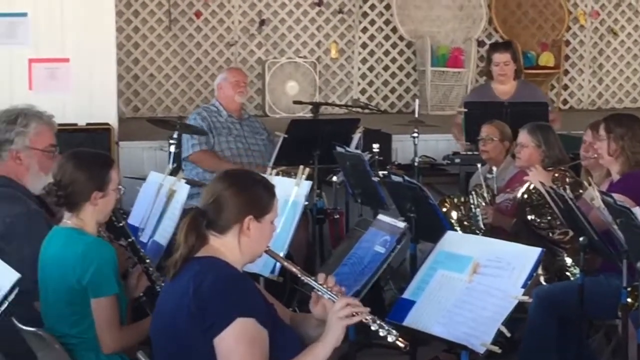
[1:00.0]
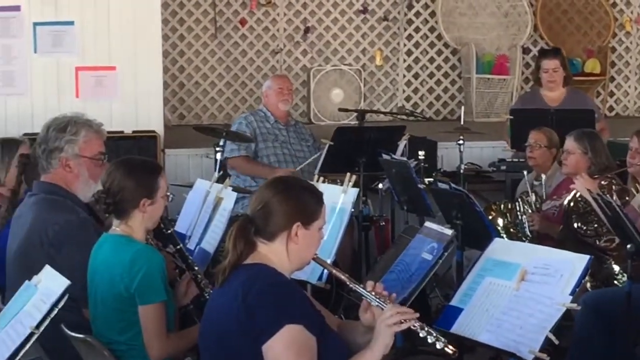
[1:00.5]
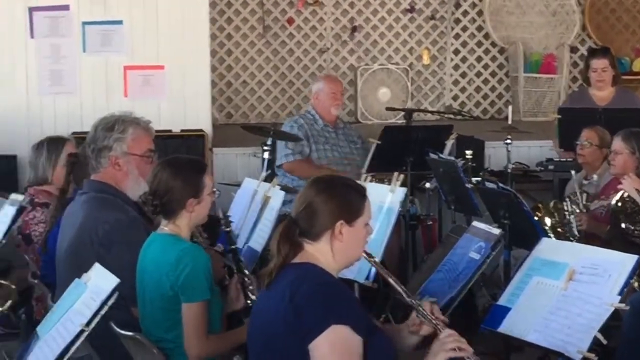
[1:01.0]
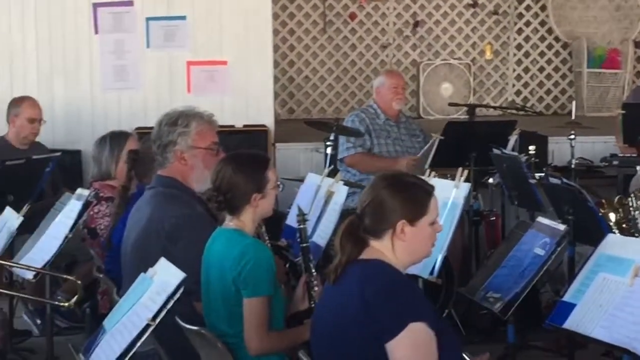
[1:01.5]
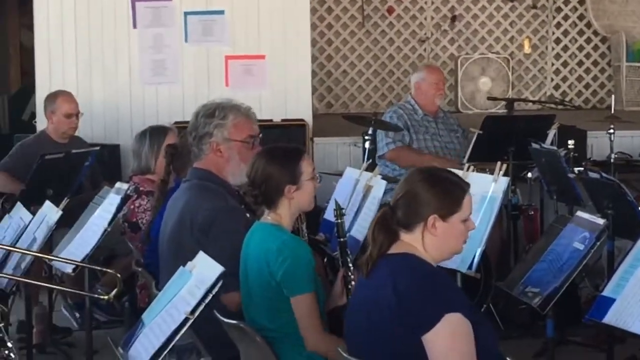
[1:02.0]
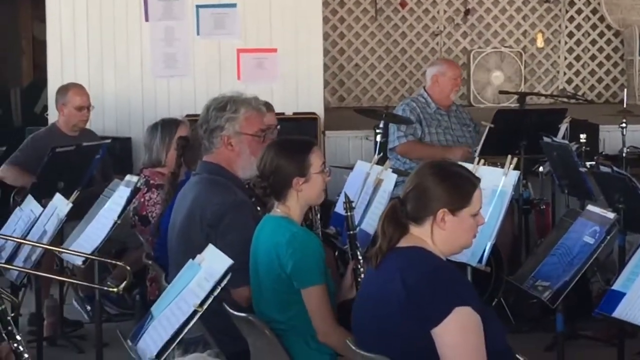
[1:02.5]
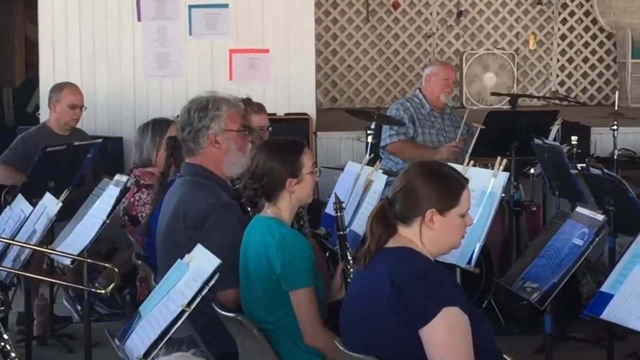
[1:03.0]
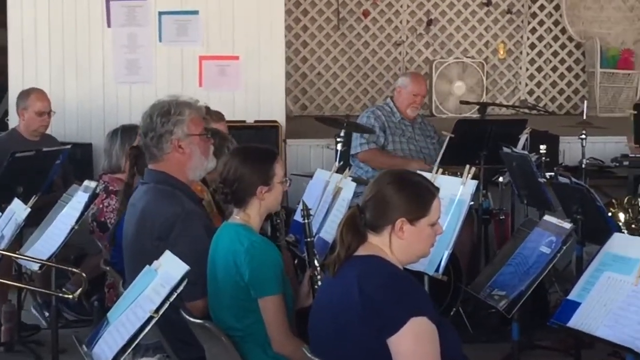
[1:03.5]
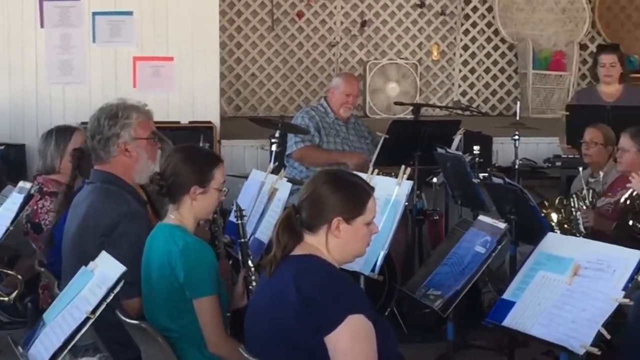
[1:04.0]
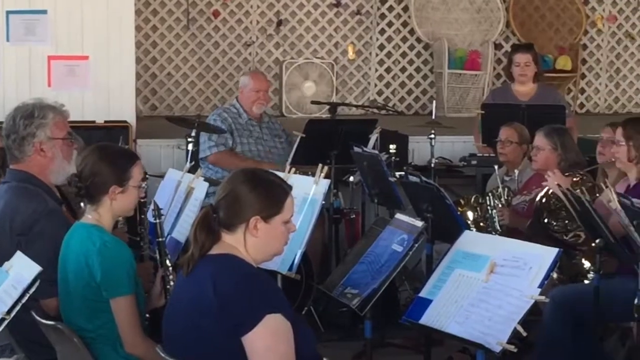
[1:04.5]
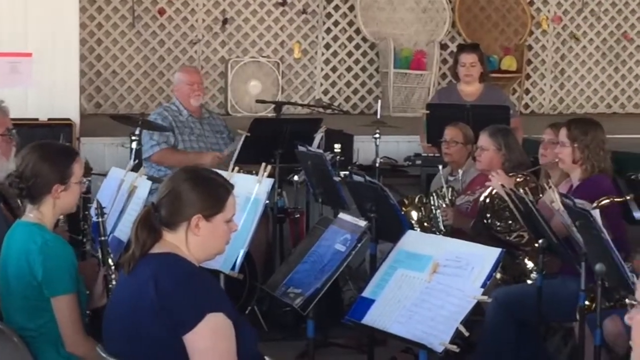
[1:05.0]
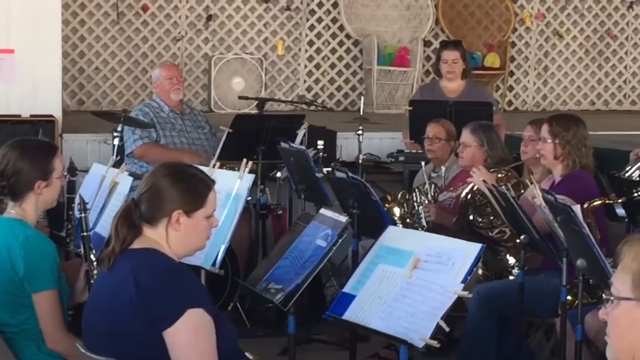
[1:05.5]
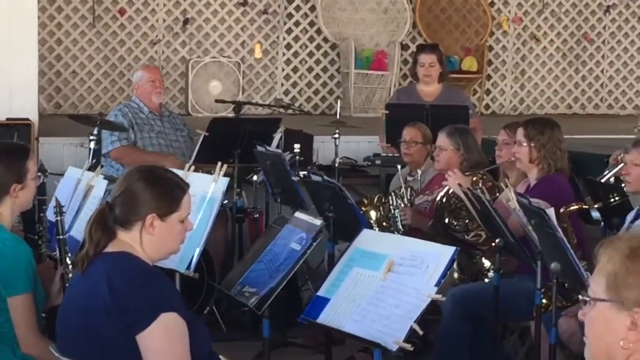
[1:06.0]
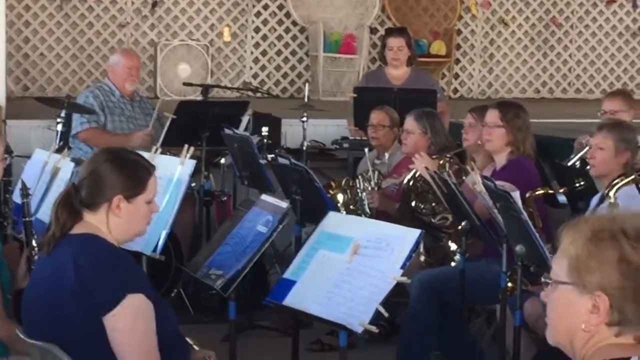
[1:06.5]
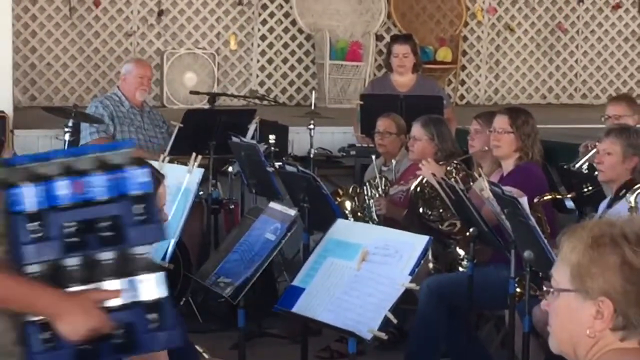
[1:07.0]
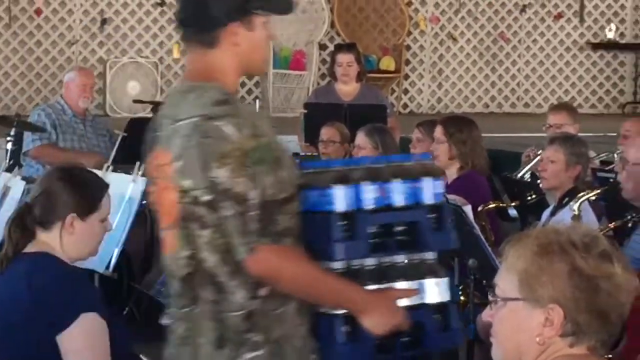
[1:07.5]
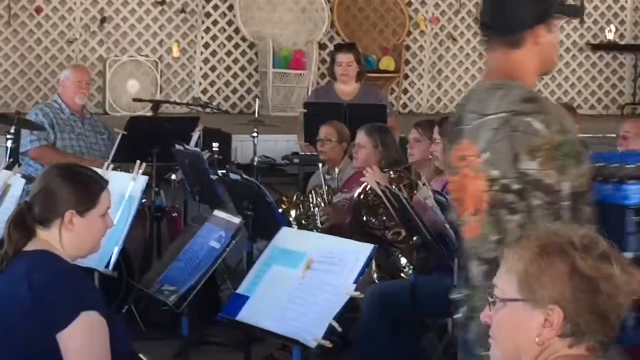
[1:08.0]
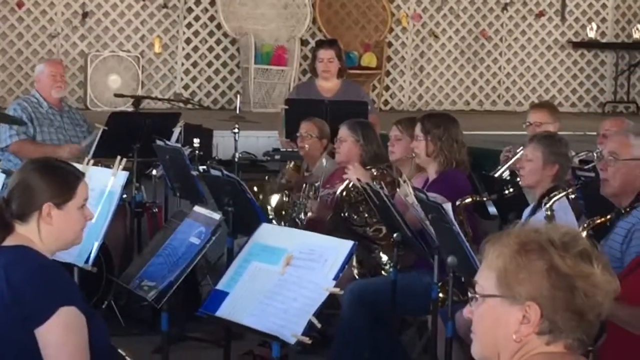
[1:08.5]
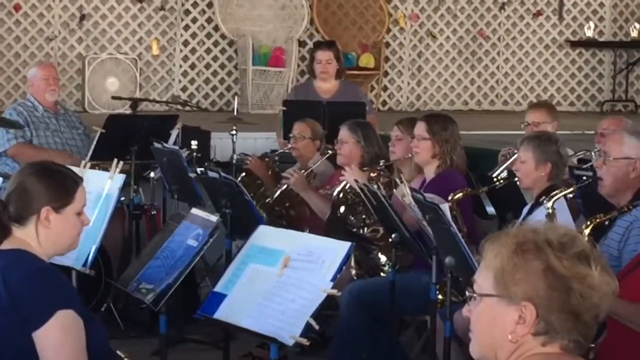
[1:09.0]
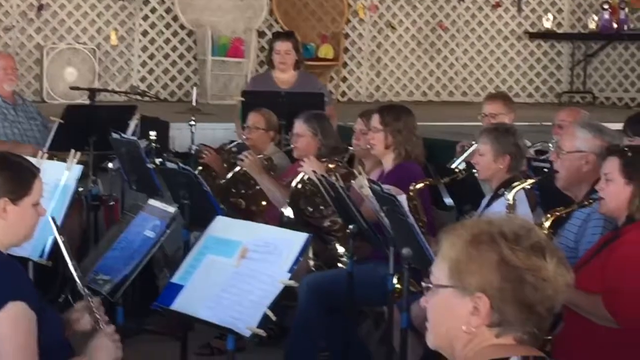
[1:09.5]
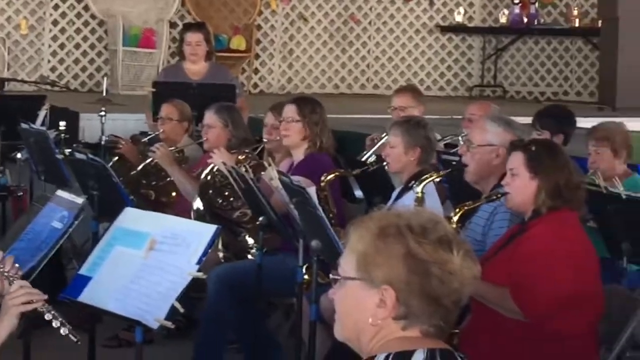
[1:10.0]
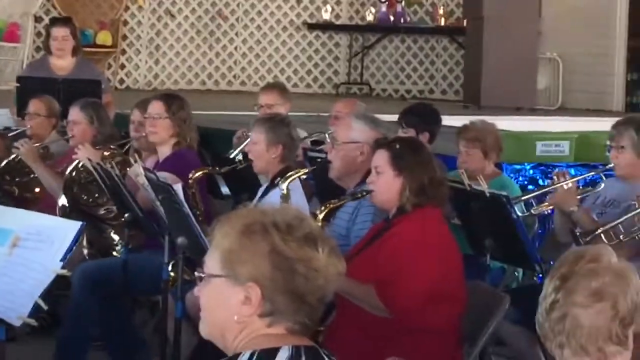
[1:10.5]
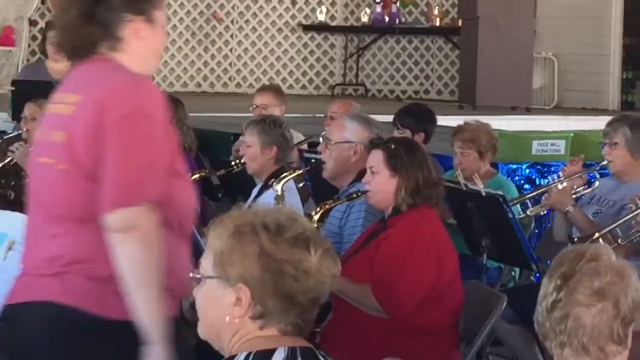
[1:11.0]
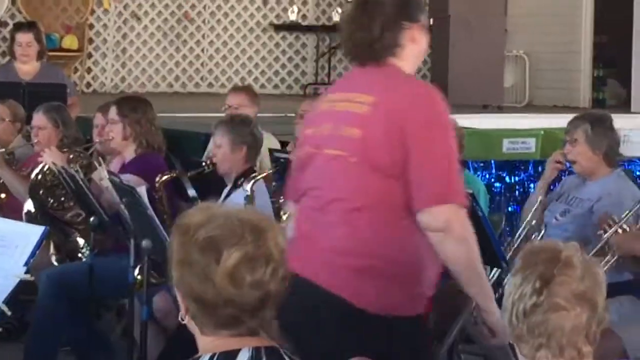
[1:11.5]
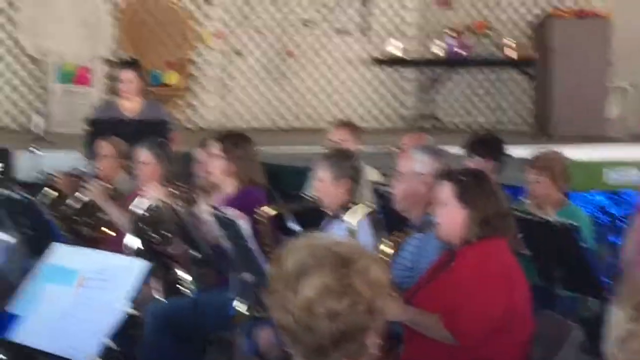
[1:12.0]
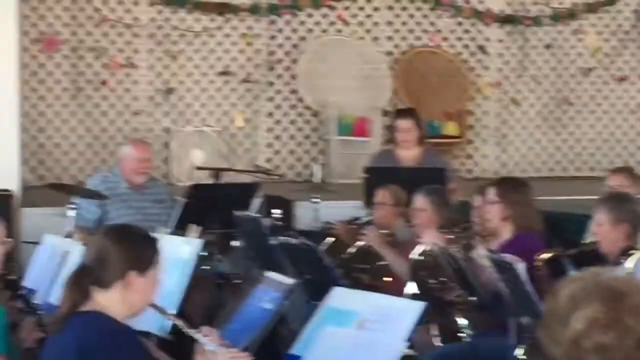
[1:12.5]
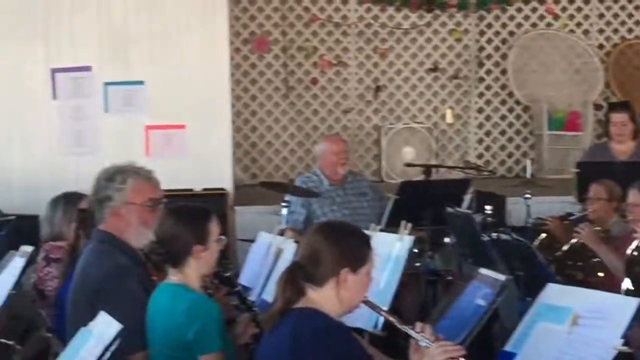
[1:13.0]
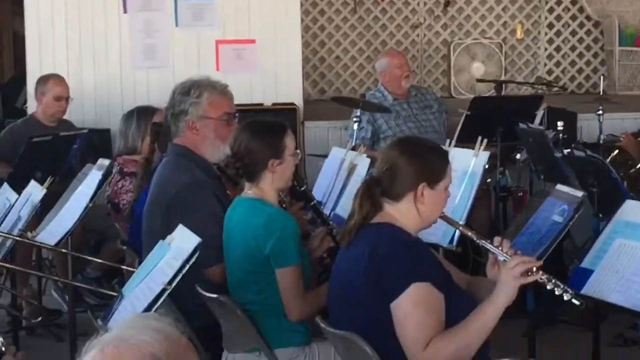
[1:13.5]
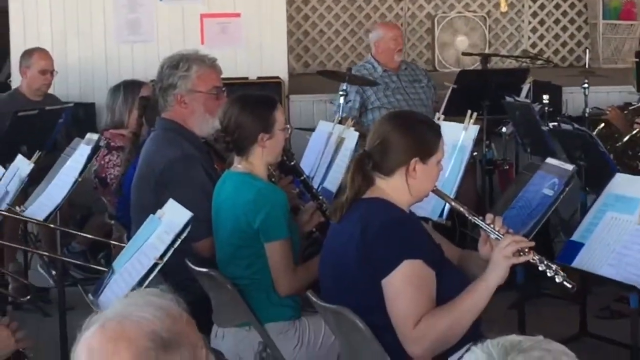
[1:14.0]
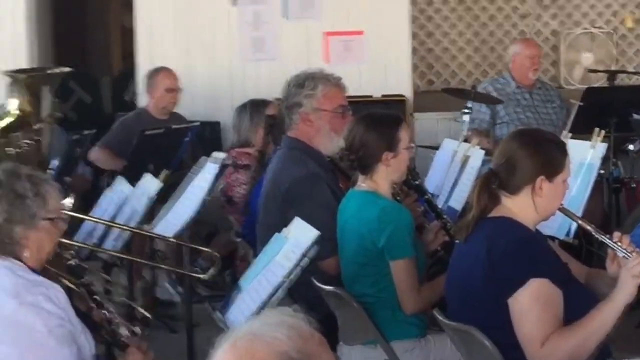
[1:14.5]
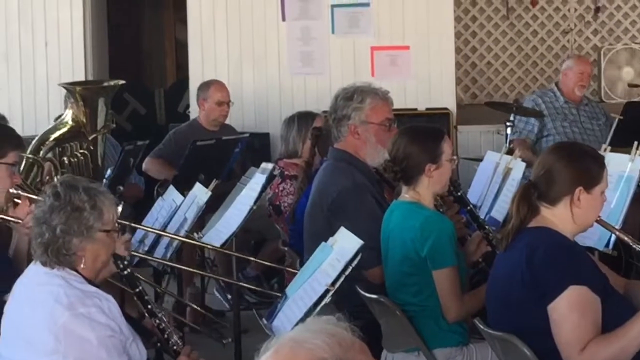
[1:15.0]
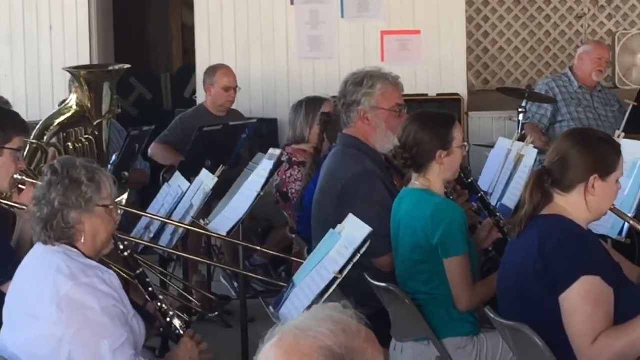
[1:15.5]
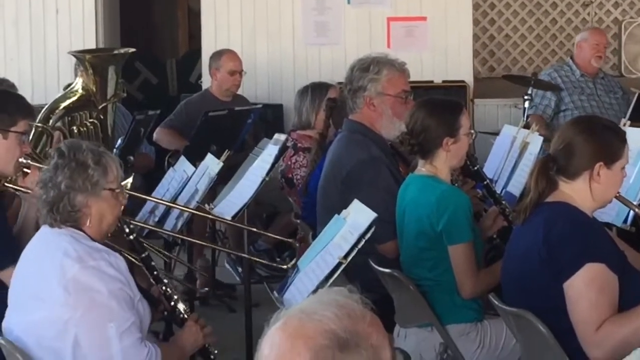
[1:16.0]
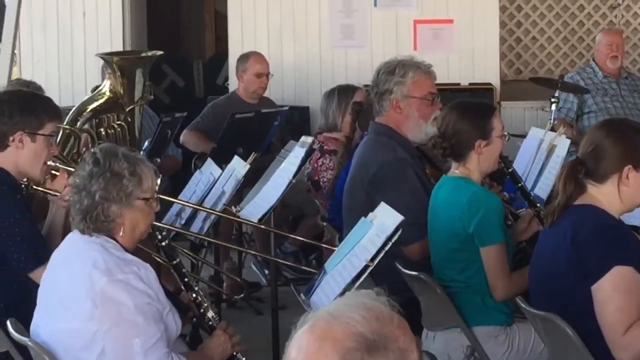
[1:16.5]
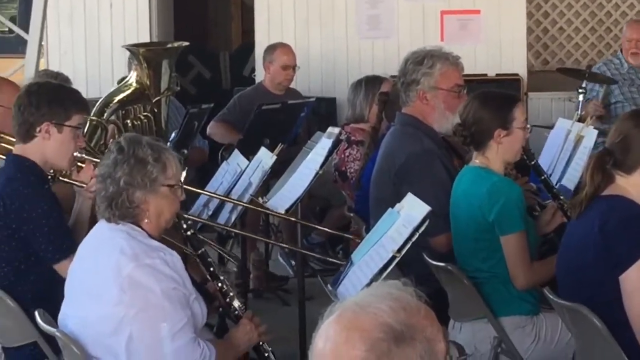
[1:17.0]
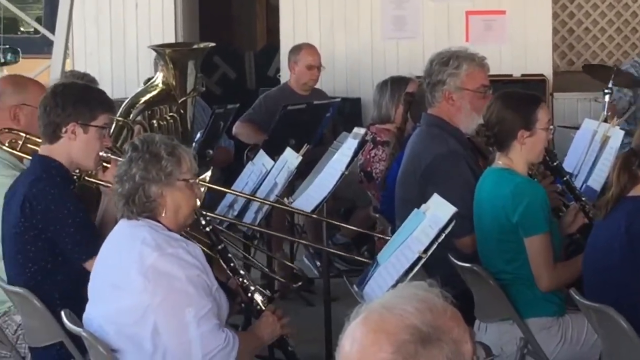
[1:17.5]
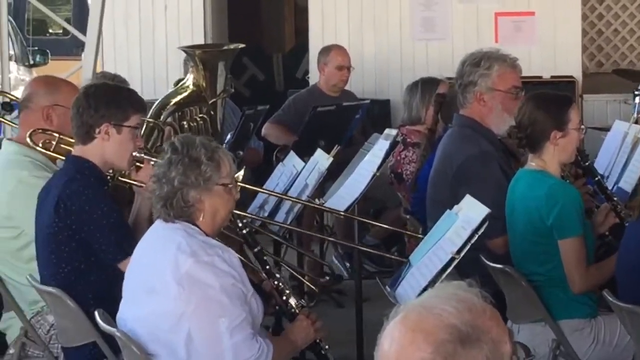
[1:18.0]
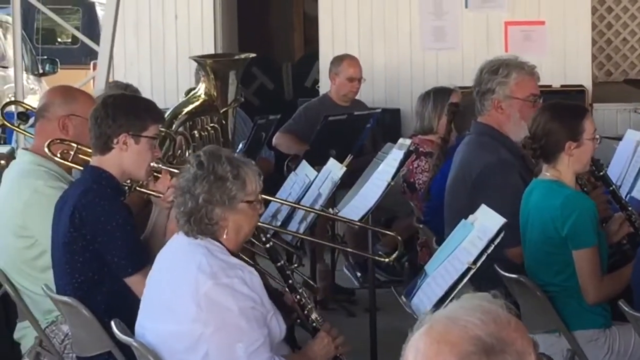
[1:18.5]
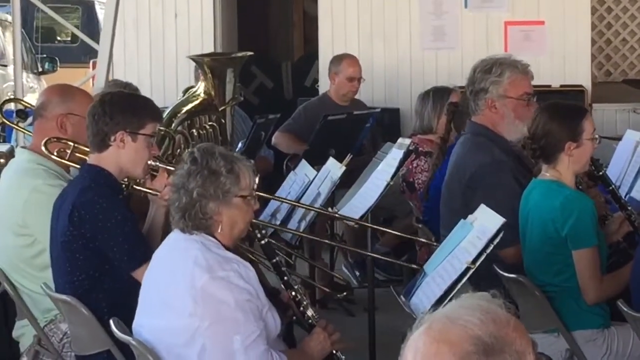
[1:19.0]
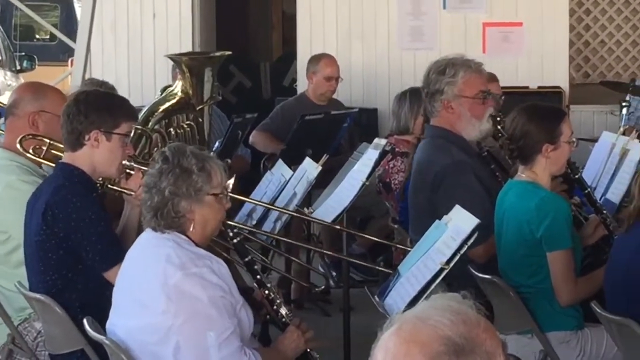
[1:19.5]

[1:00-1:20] The man in the checked shirt bangs the drum in a sort of 4-4 beat while the other players play woodwinds and other instruments. A man carrying boxes crosses the screen from left to right as the band plays. Other people cross in front of the camera as well, including a woman in a pink shirt. An older woman plays a trombone quite energetically as she watches her sheet music. About a dozen band members are visible in this close-up frame, along with the percussionists on the left and the woman at the podium. The woman at the podium wears a sort of V-neck sweater, has short brown hair, and looks to be in her thirties, possibly late thirties.